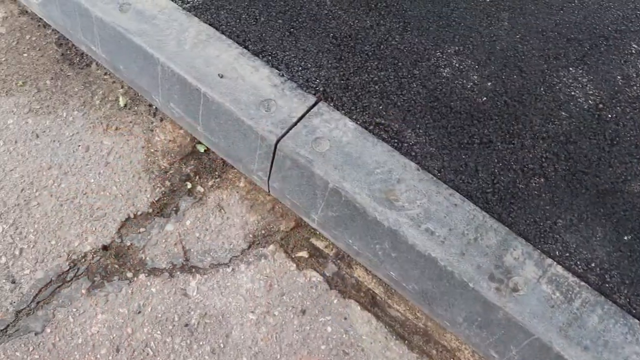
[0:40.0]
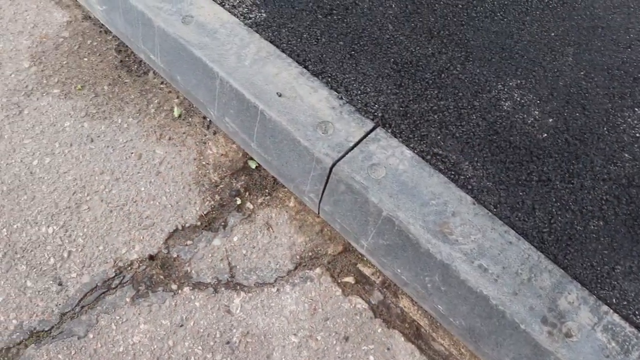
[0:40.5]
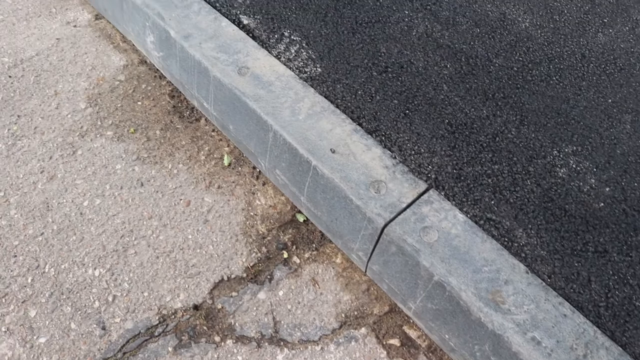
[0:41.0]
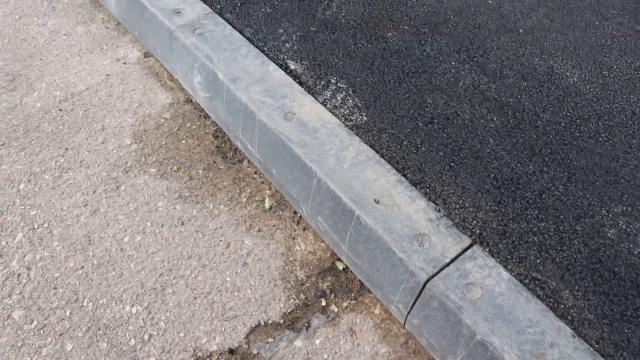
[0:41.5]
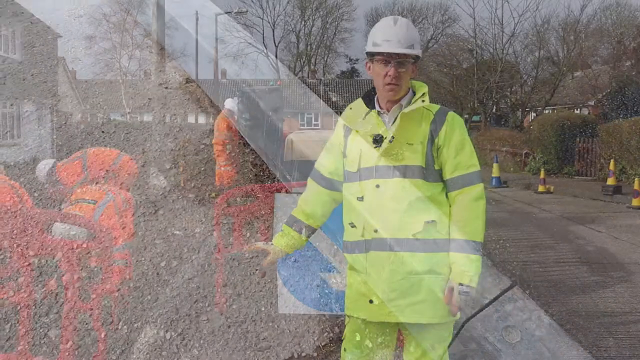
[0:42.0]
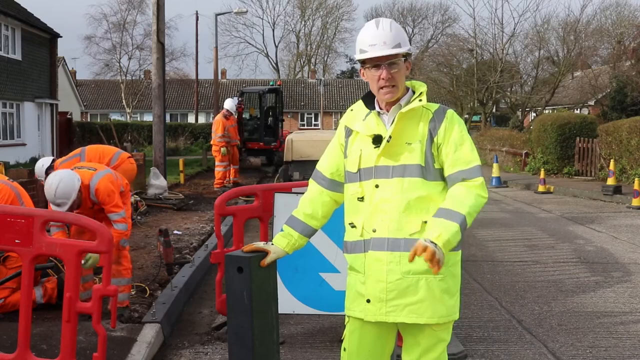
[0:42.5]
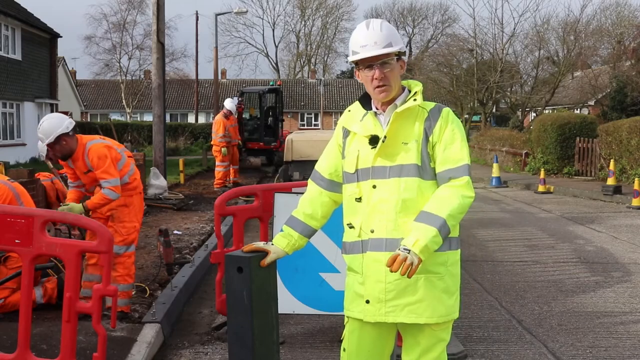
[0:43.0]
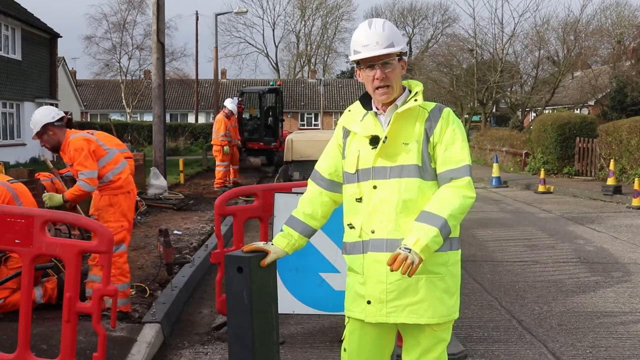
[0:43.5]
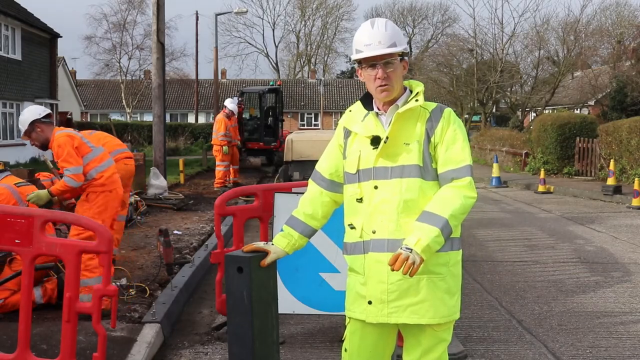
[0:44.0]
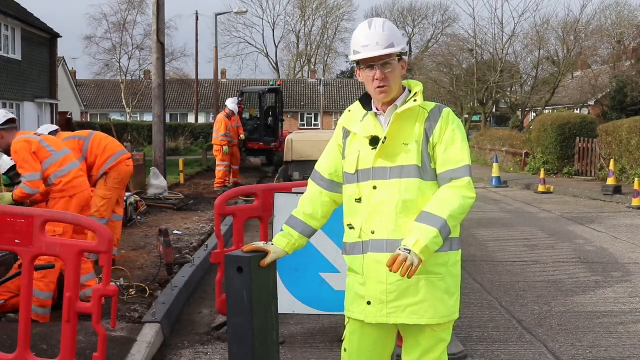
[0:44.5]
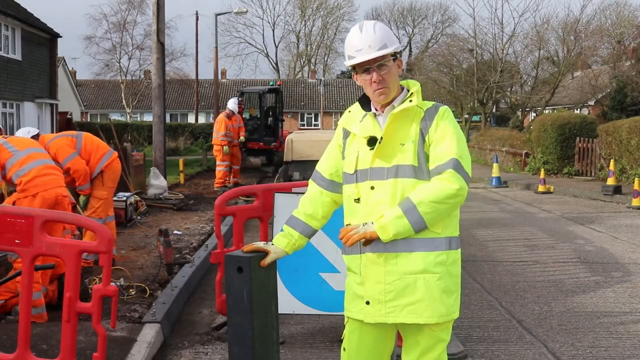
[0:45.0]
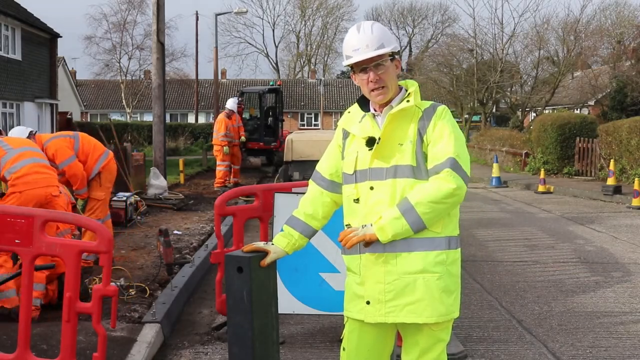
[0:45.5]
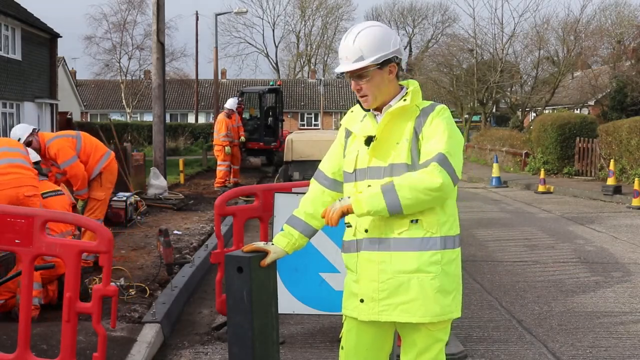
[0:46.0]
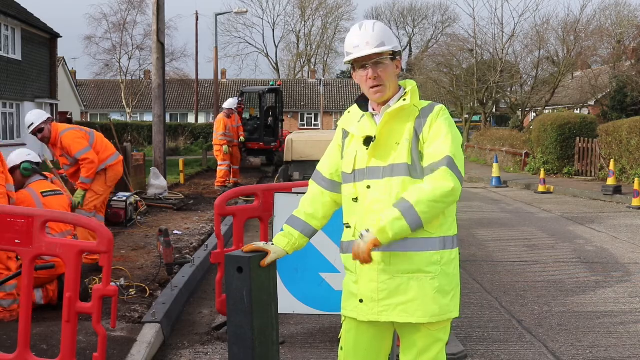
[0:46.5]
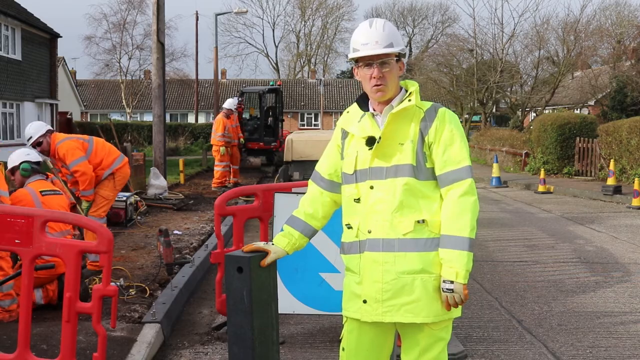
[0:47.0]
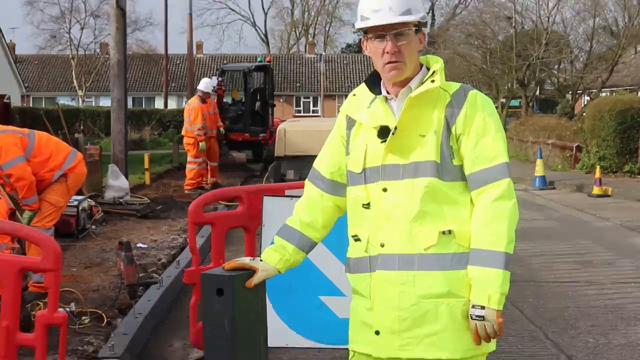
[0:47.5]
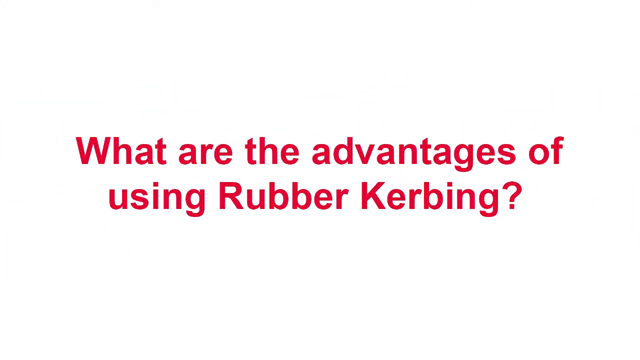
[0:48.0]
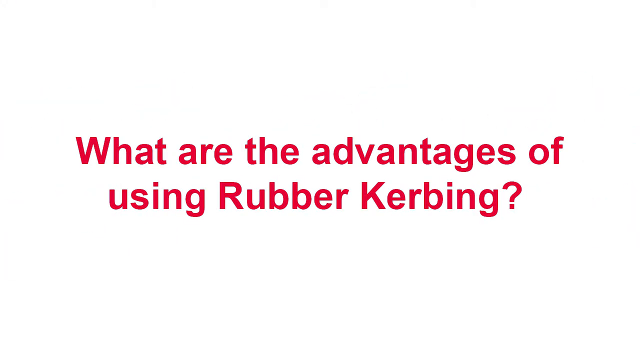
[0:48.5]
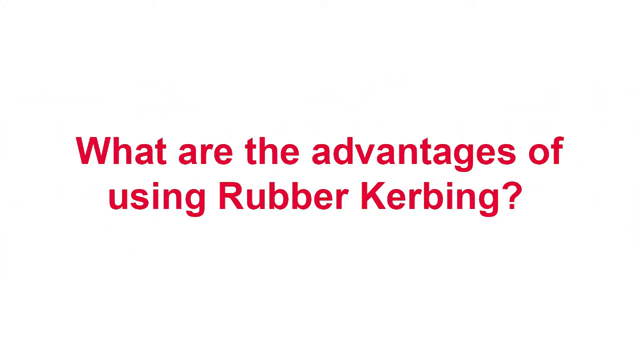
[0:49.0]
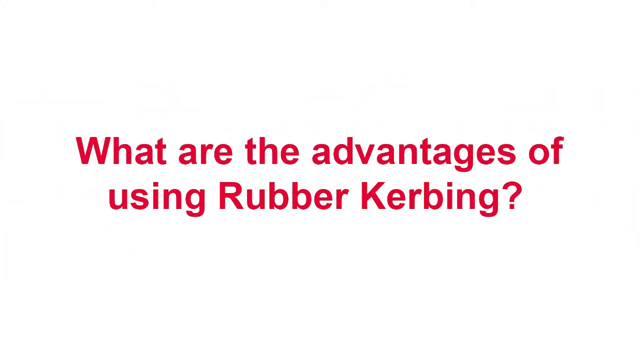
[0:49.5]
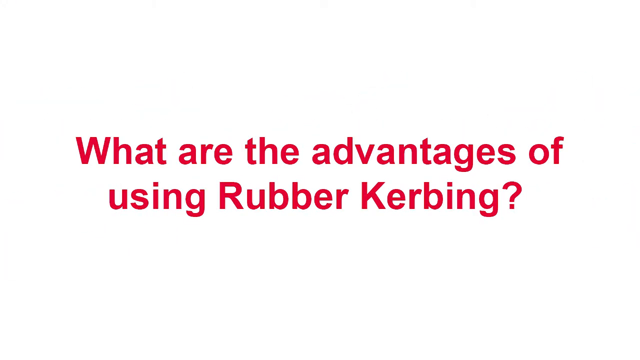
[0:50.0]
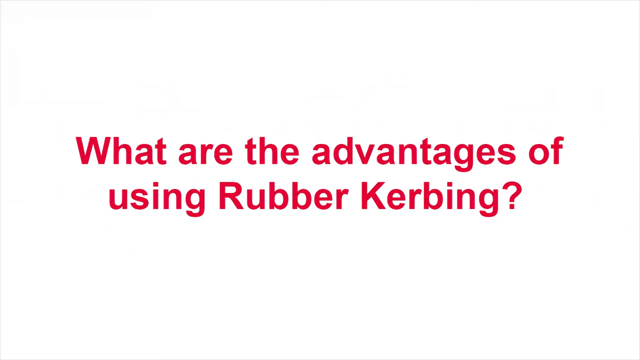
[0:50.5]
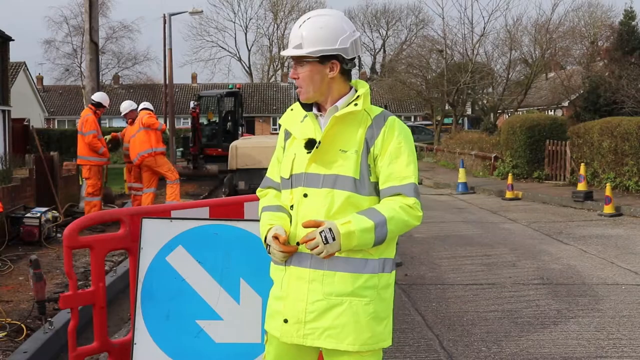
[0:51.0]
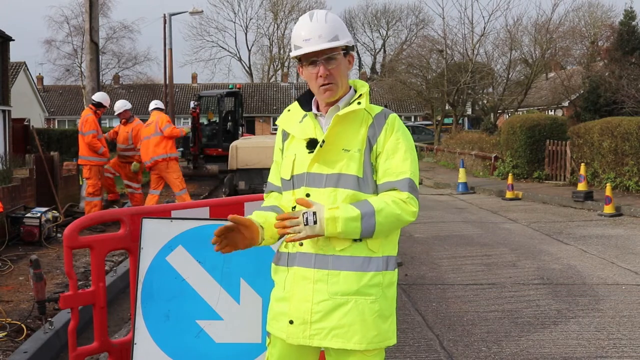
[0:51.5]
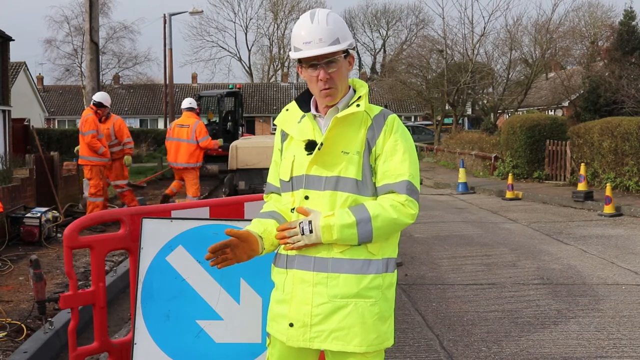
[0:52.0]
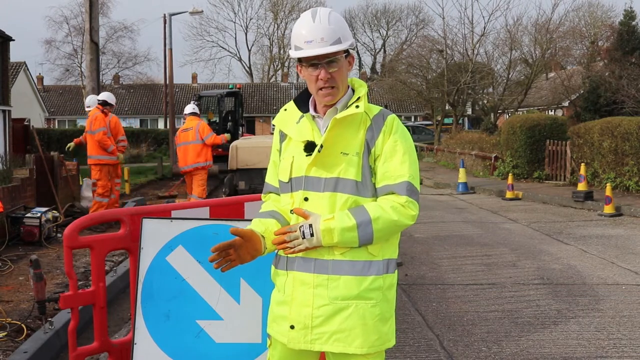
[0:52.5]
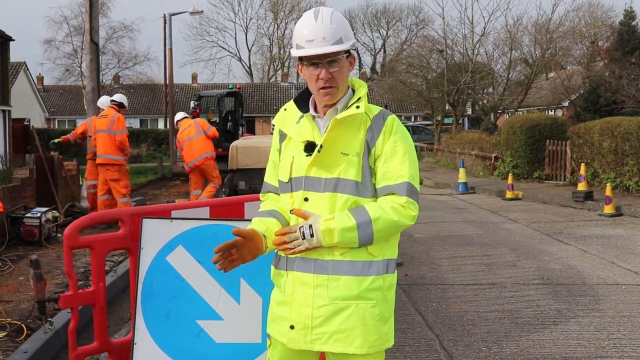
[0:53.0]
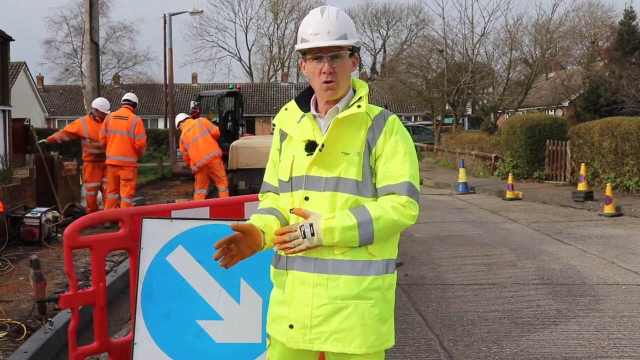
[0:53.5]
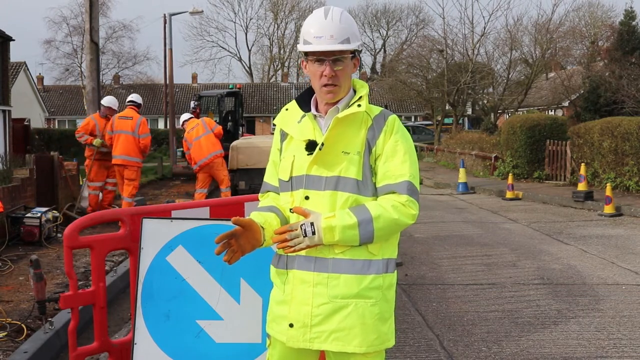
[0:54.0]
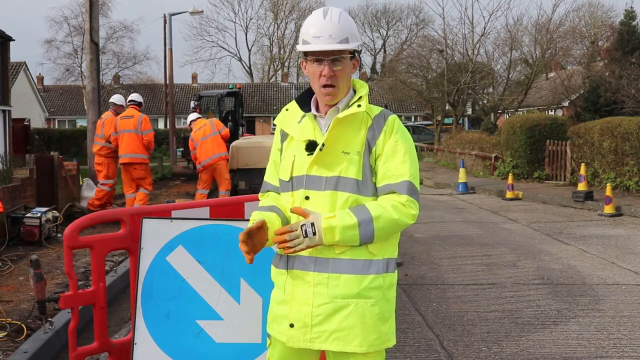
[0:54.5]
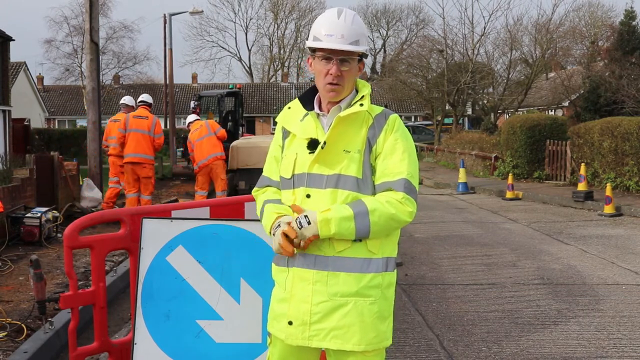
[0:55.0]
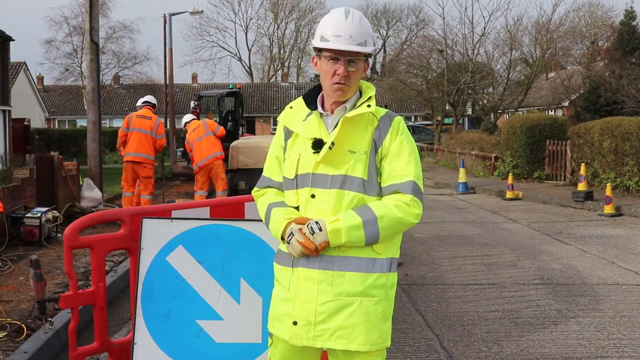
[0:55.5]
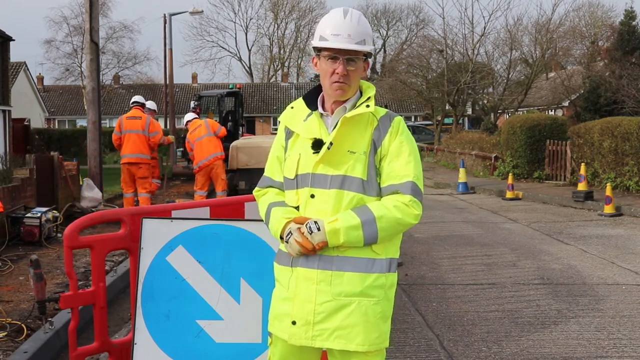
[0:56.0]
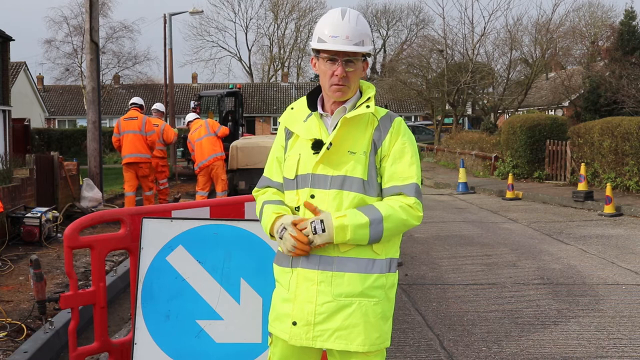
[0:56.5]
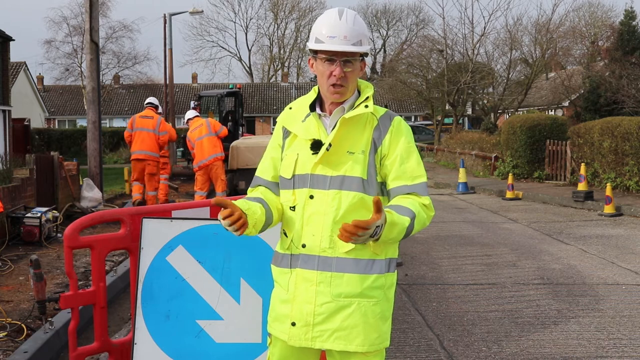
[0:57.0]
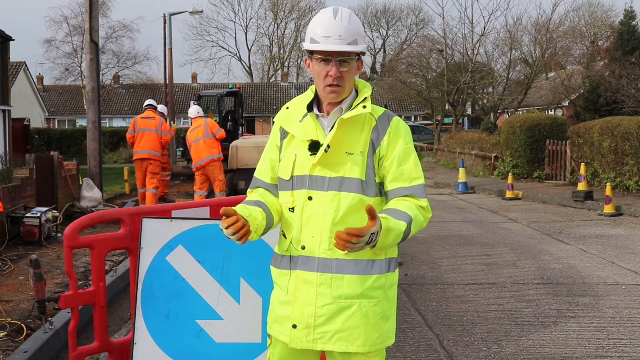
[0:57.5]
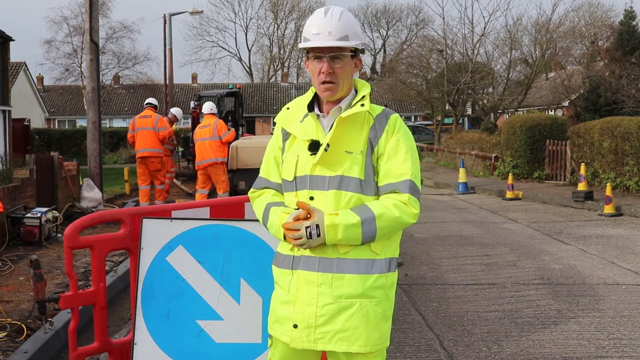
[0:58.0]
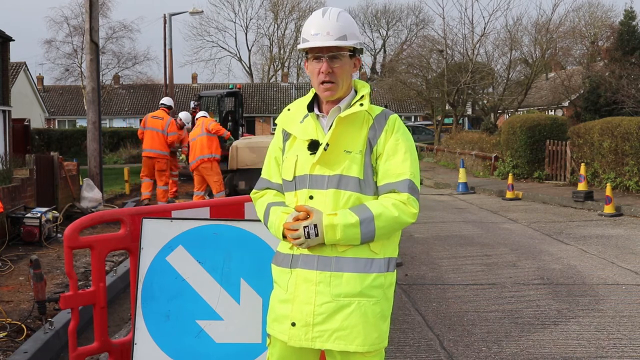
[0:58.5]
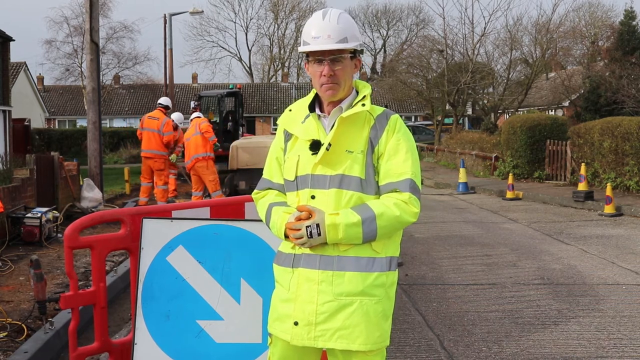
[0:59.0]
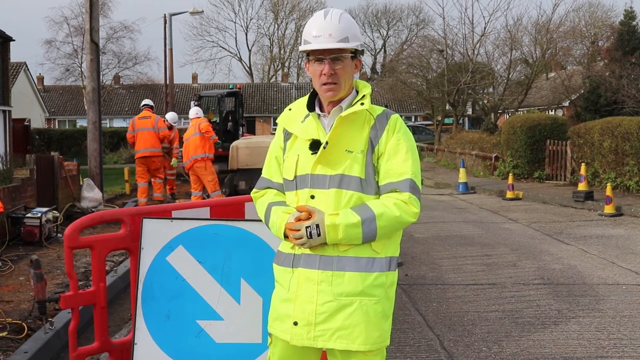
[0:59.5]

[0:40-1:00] A close-up shows large installed curbs. On the left, the sidewalk is made of concrete and is cracked. On the other side there appear to be black pebbles, almost like fresh cement or black pavement. The camera returns to the counselor, who is still holding the curb with his right hand and leaning against it. A phrase in red letters on a white background reads "what are the advantages of using rubber kerbing?" The shot goes back to the counselor, and the curbing is no longer in the frame. It is daytime. In the background on the left is an excavator, with three construction workers handling it and standing around it. A sign to the man's left near his torso, directly behind him, points down and to the right.